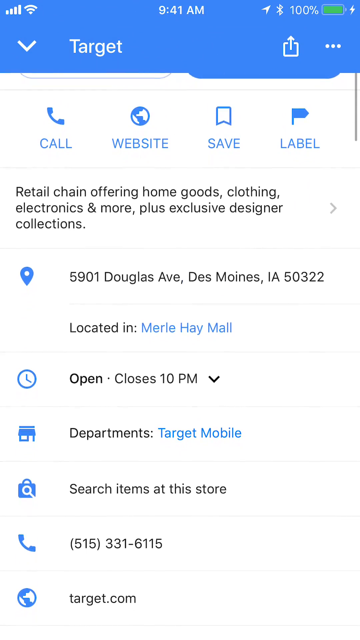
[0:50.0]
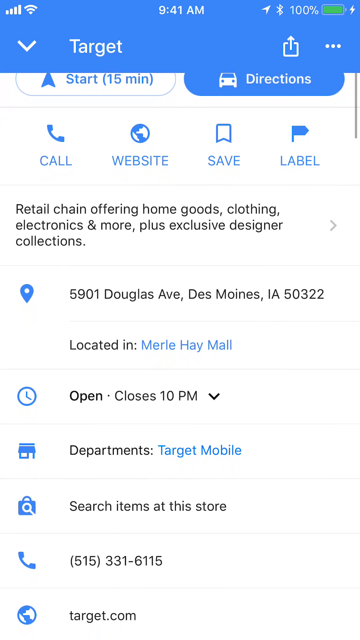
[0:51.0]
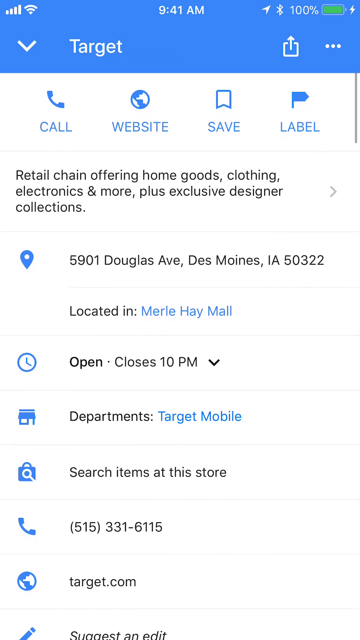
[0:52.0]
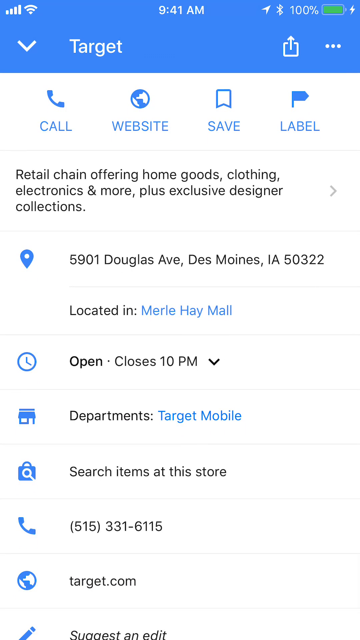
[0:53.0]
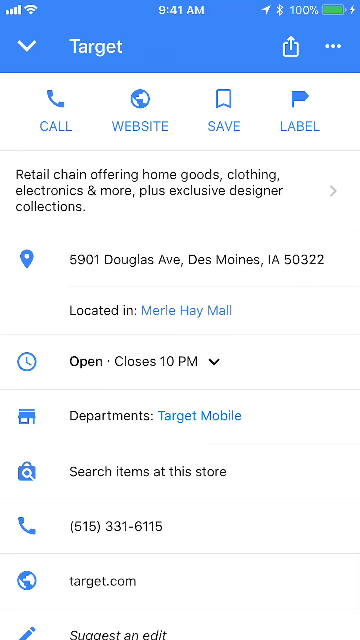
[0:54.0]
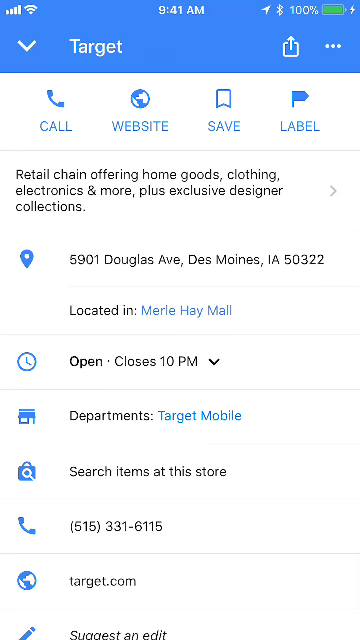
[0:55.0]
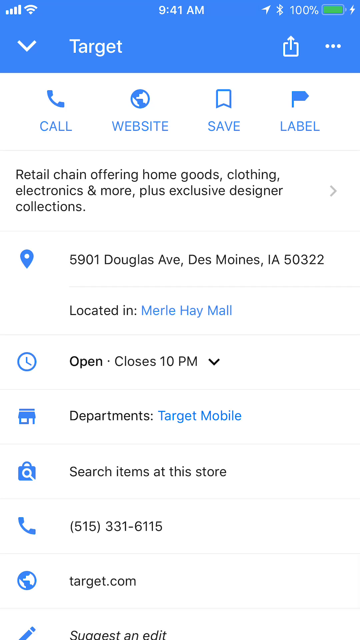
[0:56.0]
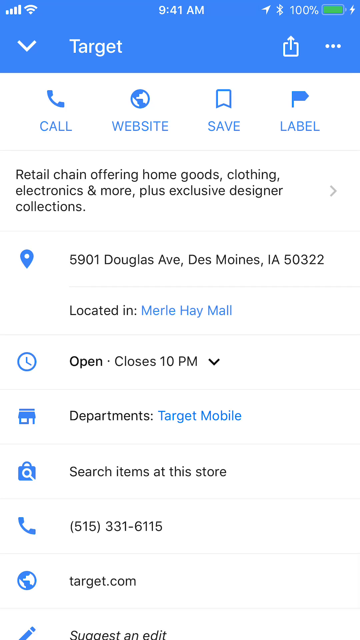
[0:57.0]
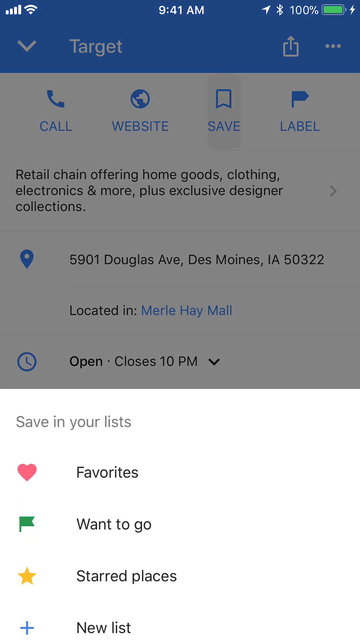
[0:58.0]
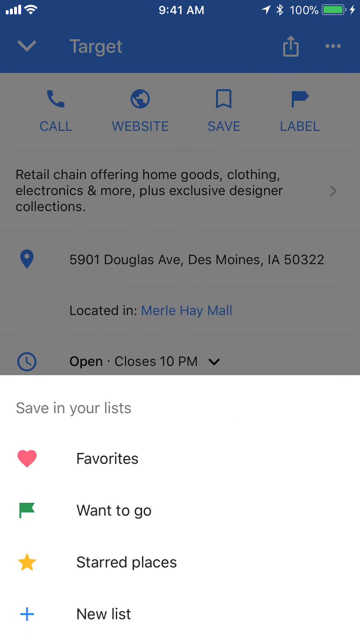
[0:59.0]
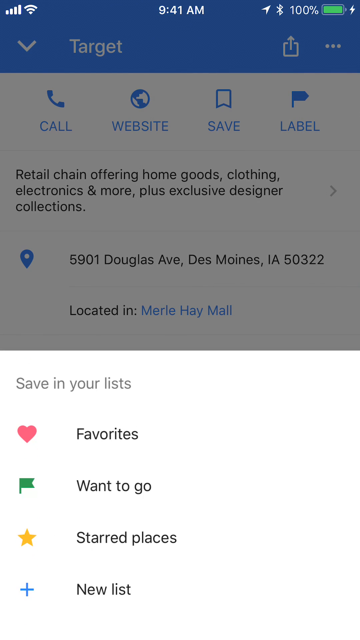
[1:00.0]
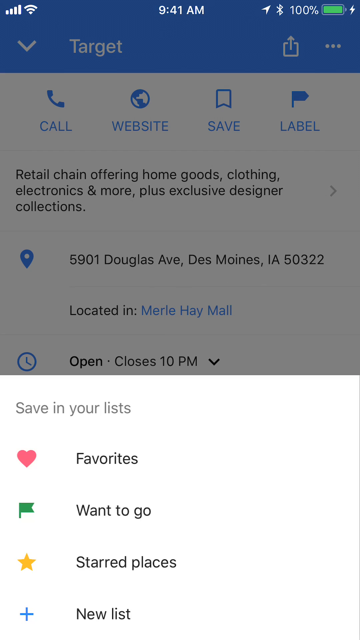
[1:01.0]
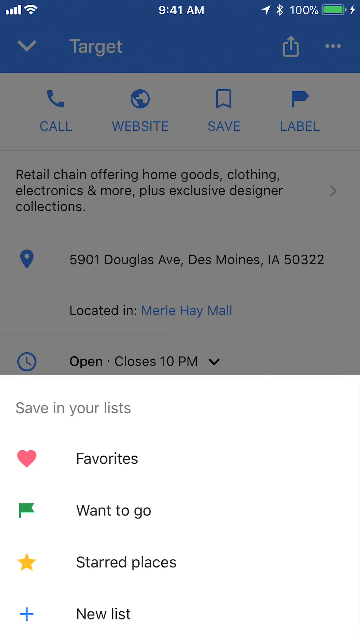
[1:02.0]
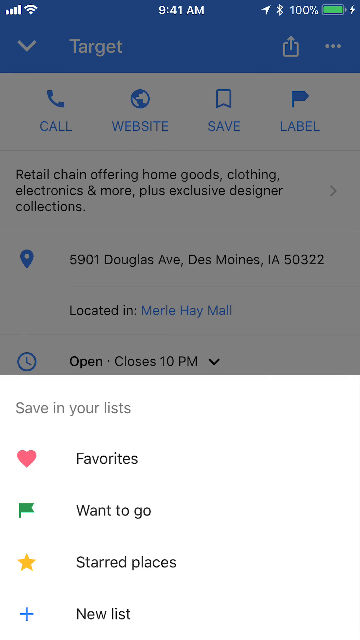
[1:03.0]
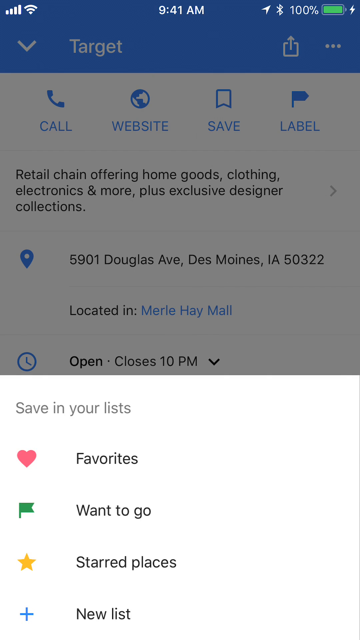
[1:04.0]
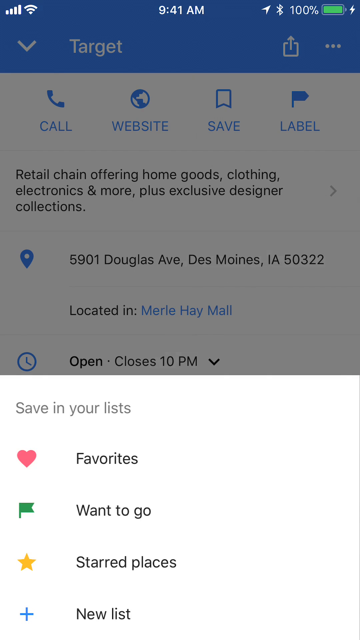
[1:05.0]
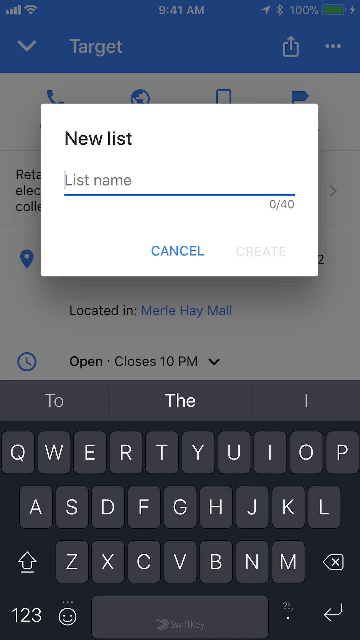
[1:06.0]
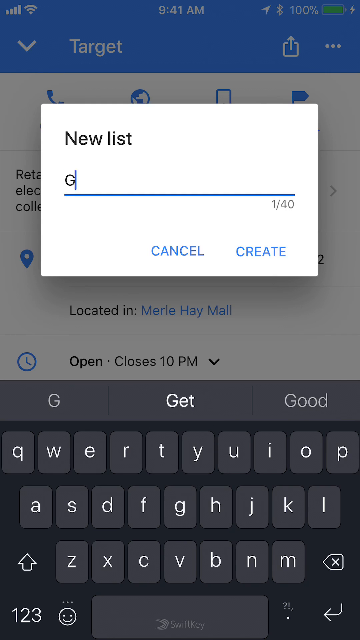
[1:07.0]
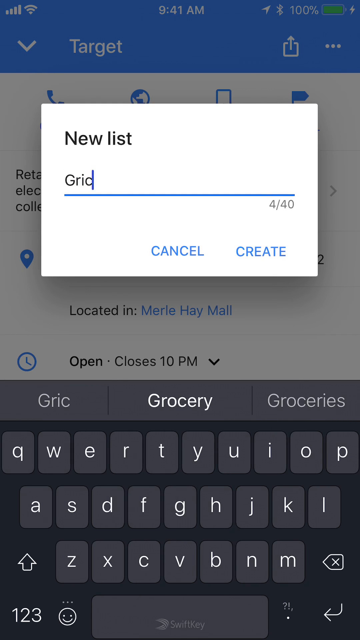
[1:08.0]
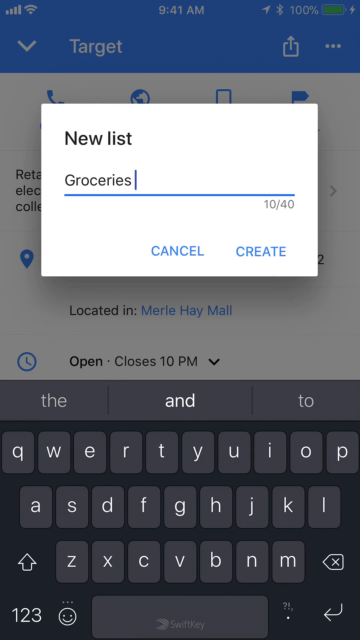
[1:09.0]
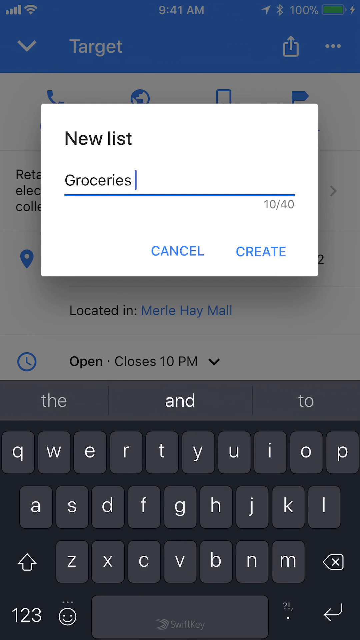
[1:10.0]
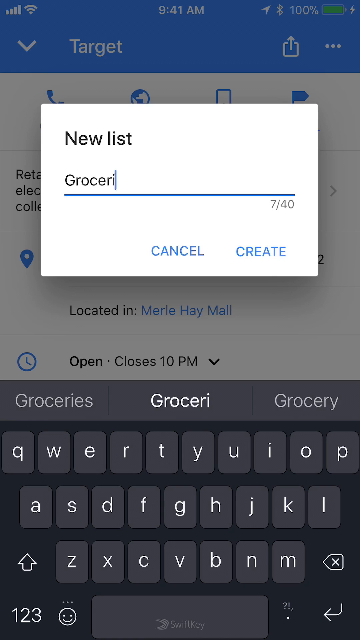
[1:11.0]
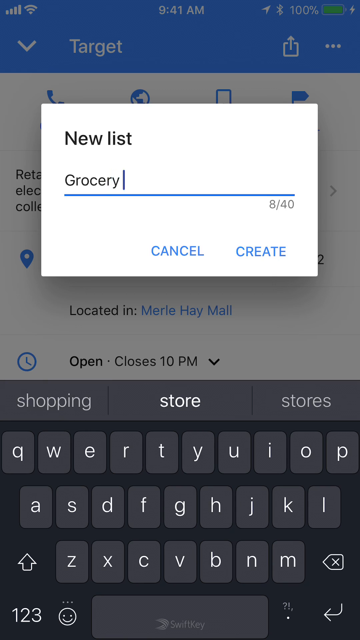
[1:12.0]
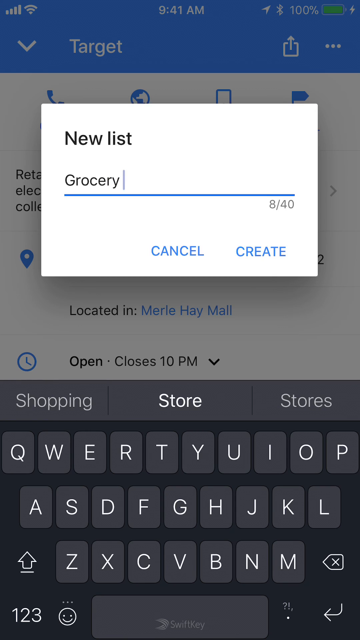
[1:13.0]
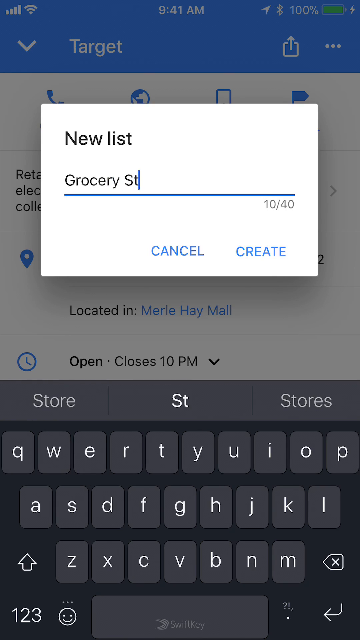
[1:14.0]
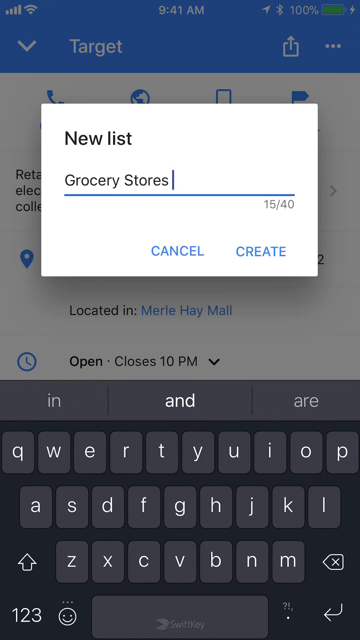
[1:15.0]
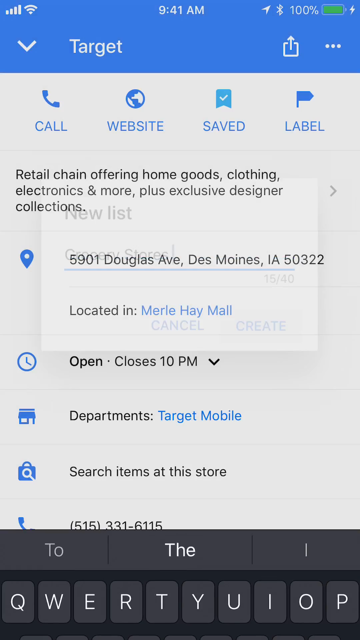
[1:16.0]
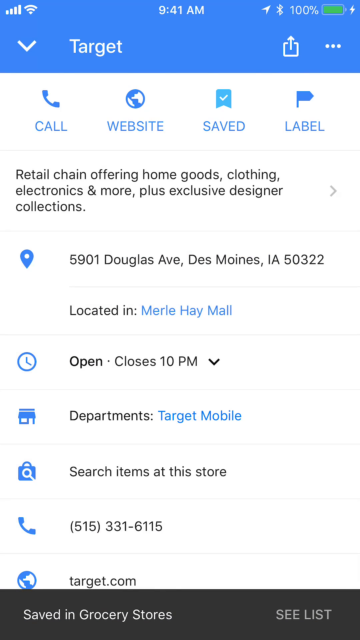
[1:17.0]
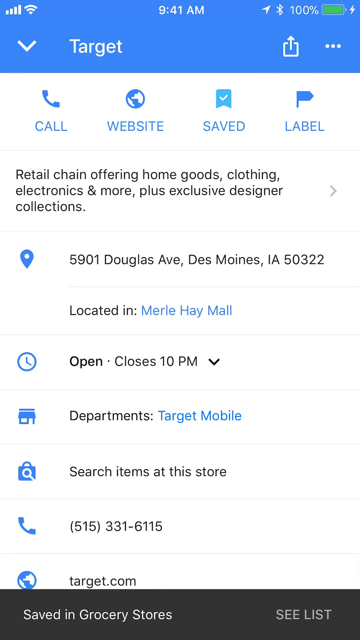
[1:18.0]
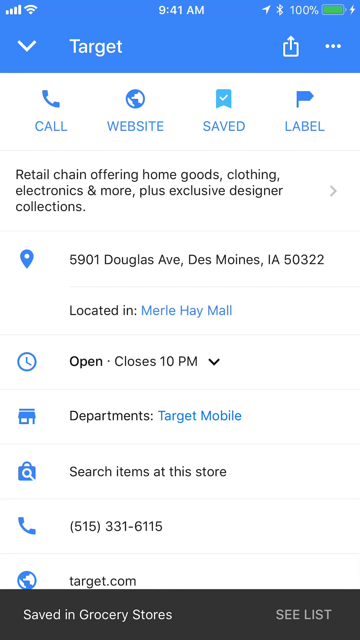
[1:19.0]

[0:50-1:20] The person scrolls down, but there is nothing more to scroll, and the panel slides back up to the top. A new pop-up appears from the bottom saying "save in your lists", listing several lists called "favorites", "want to go" and "starred places", plus an option to add a new list. The user chooses the new list option, types "groceries", then changes the word to "grocery stores" and creates the list. The pop-up closes, returning to the Target info card; the user apparently has successfully added this Target location to the new list named Grocery Stores. The card shows several other options as well as a description of the Target location, which reads "Retail chain offering home goods, clothing, electronics, and more, plus exclusive designer collections." Each of these sections appears expandable and has a small arrow icon next to it.